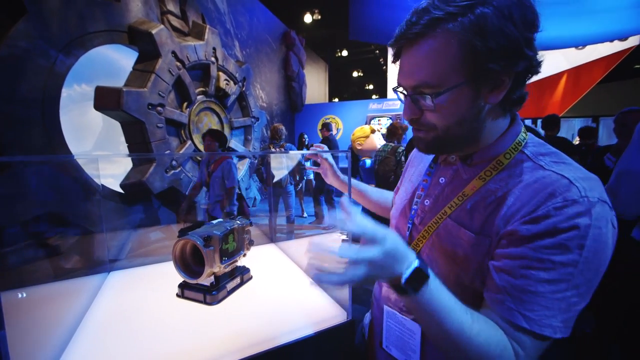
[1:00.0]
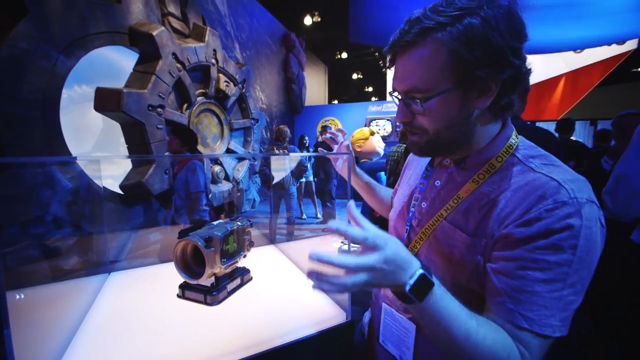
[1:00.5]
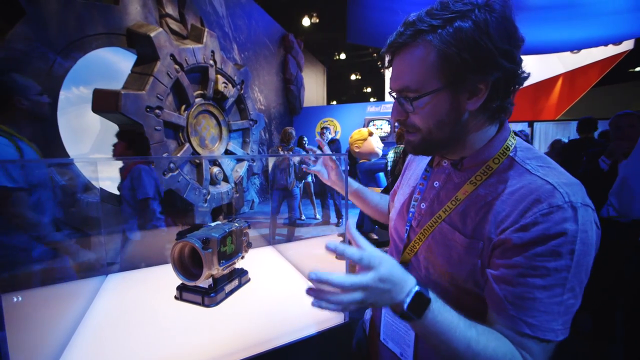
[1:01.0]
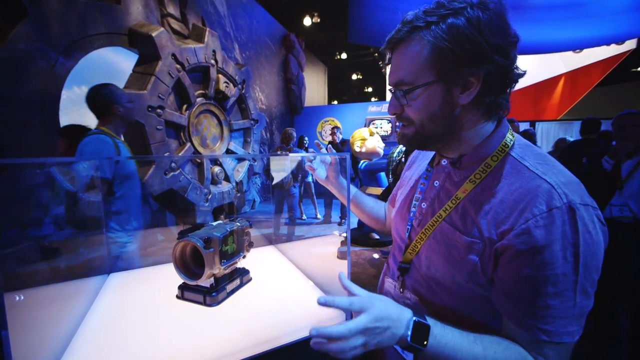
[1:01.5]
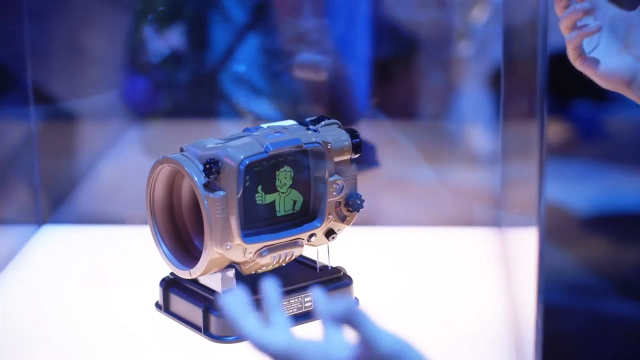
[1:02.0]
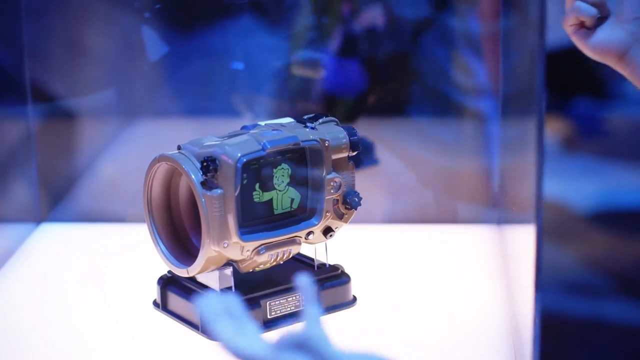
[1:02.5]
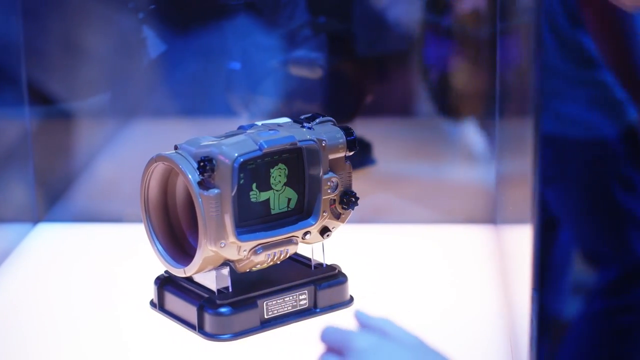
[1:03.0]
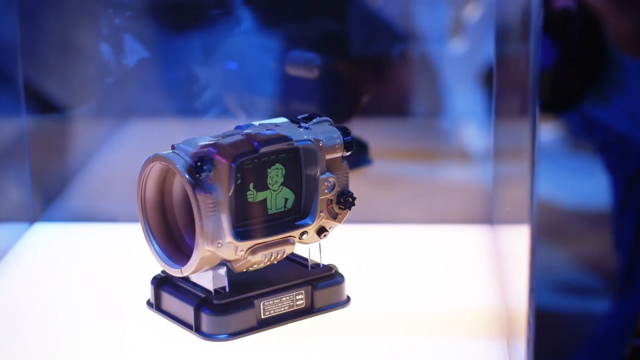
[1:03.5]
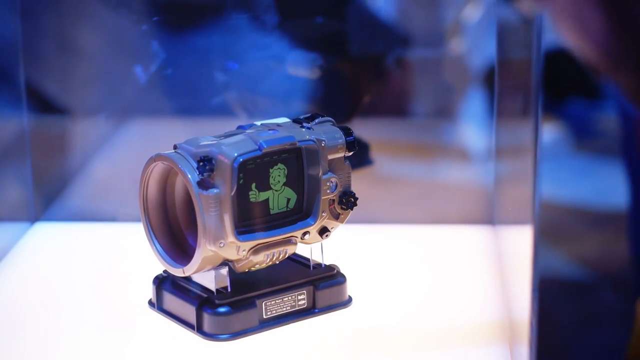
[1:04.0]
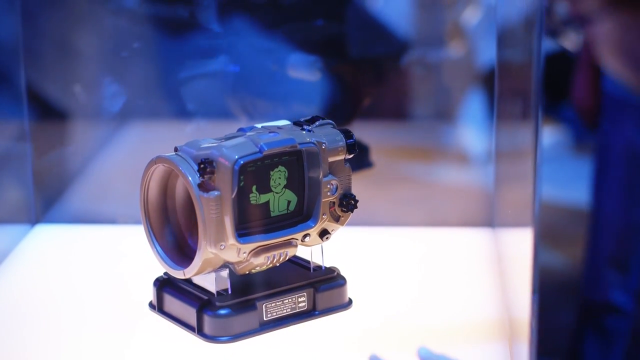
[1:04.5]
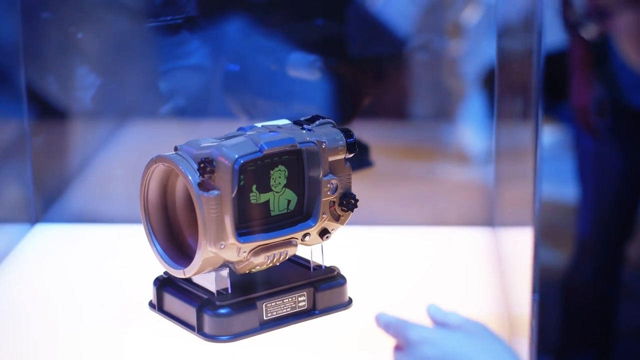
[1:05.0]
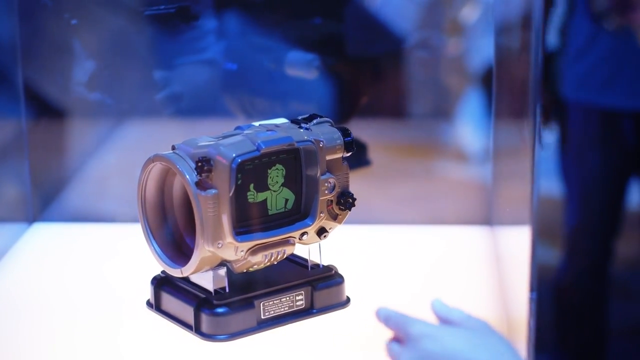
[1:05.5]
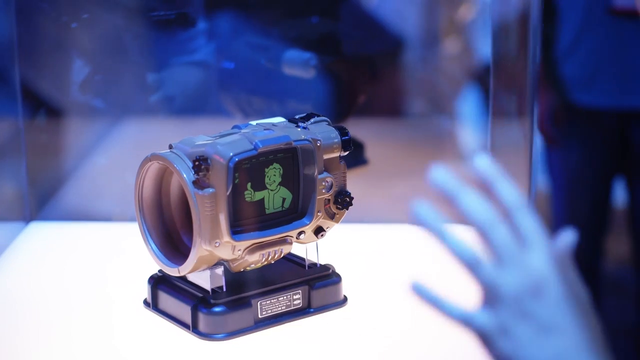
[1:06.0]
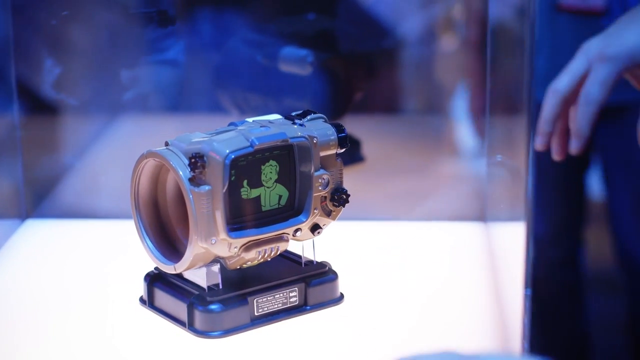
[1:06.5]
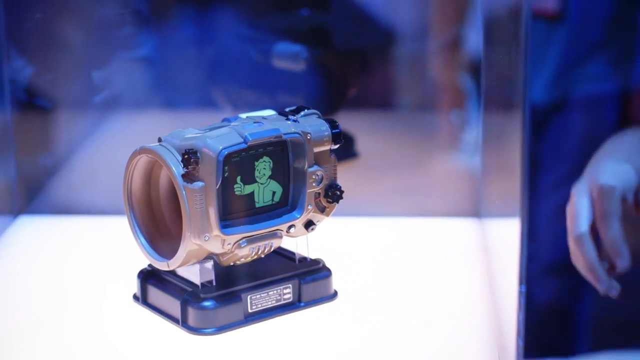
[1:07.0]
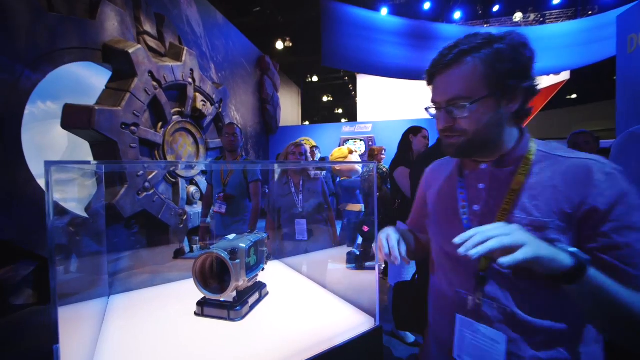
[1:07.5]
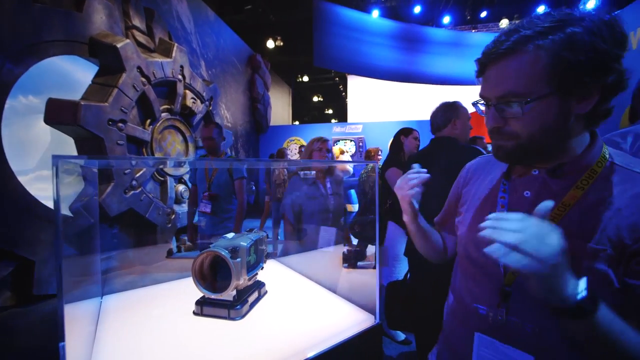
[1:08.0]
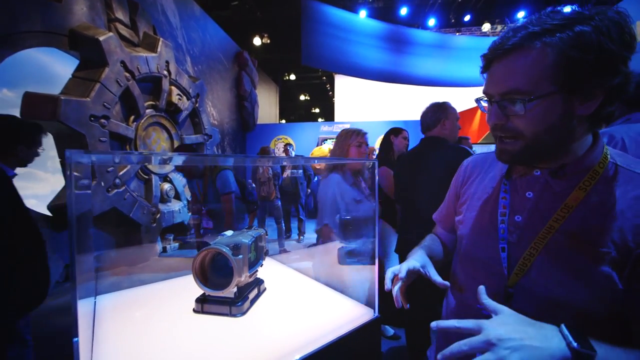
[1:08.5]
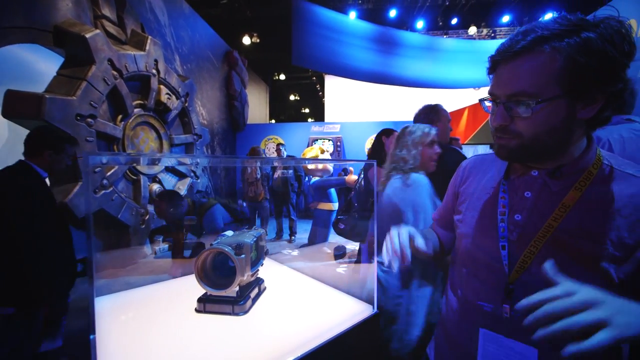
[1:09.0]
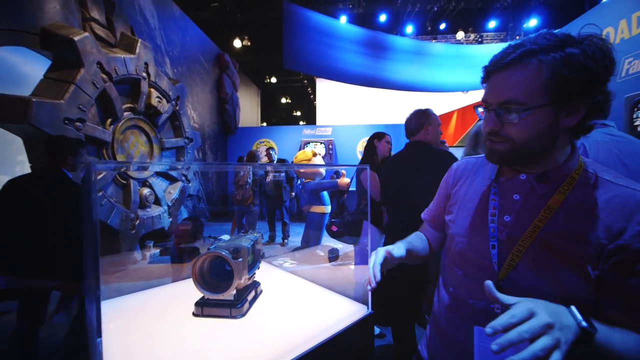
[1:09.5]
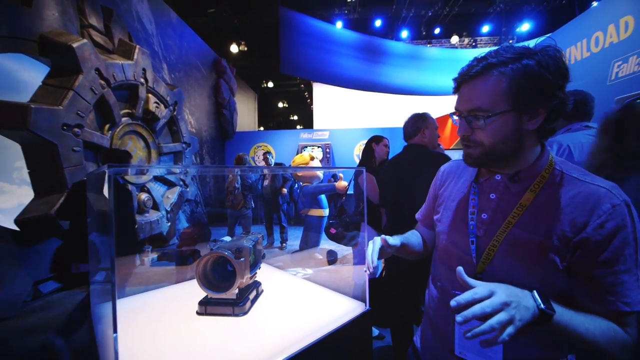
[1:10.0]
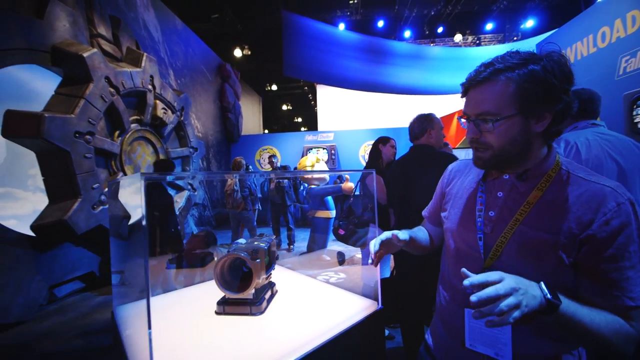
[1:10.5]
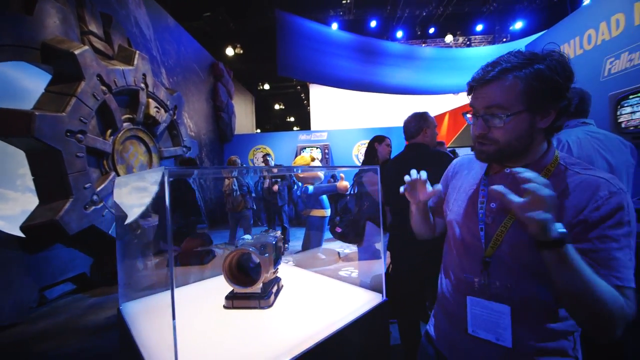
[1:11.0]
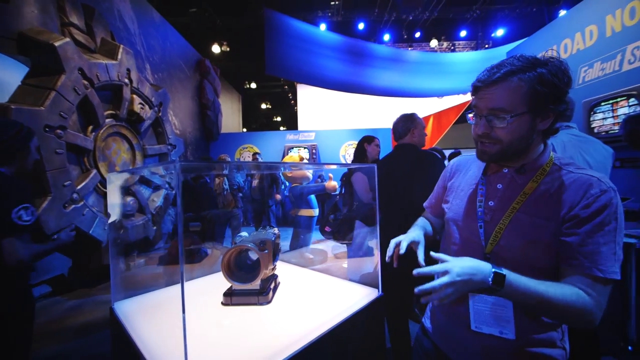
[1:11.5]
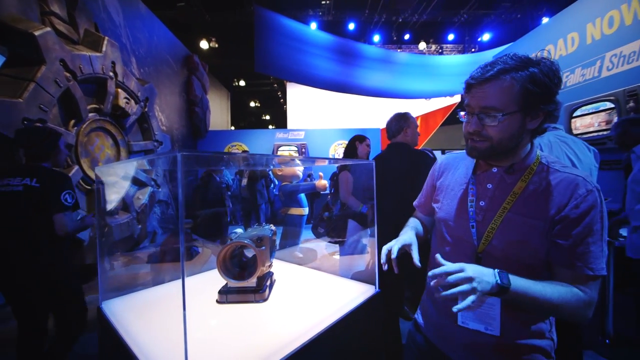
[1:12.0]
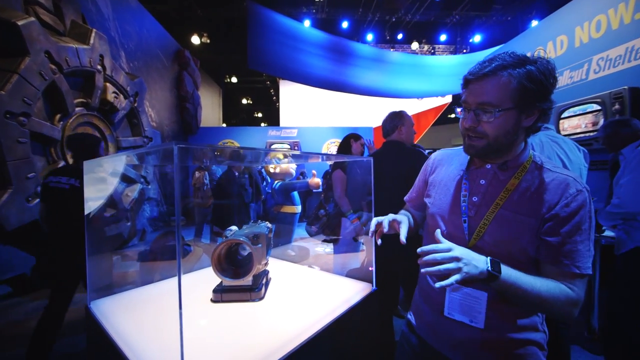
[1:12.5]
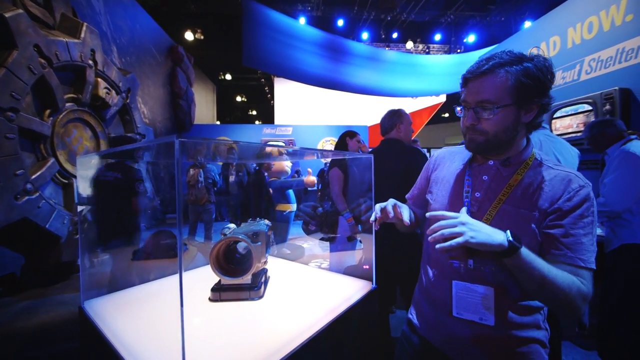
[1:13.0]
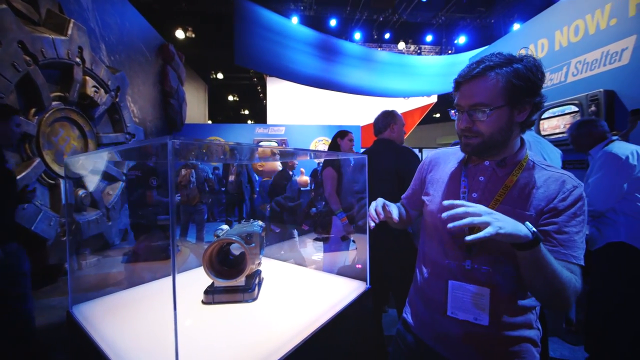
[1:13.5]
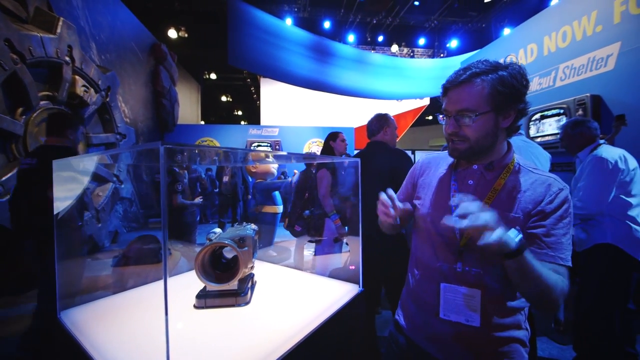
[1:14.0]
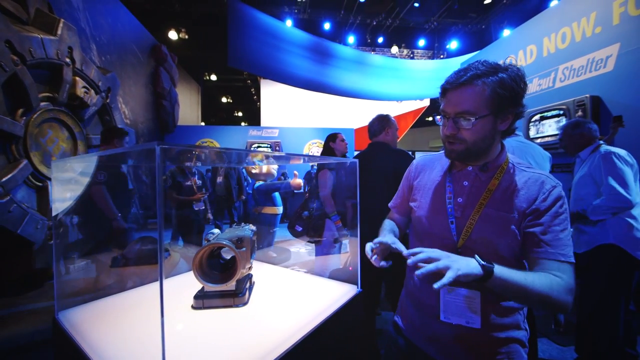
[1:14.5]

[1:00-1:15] A gold device with a screen sits on a black pedestal, with a character in the screen. A man in a pink shirt, a black watch, a lanyard and glasses motions at the device as he talks about it, then looks at his watch. A tight shot shows the device inside the clear case. People walk around, and a woman with long blonde hair walks toward the camera. A man looks at a screen. There is a blue wall, and a hand appears in the screen. A woman walks past, a man in a black jacket walks past, and a man in a t-shirt with a lanyard with white writing walks past. There is a picture of a device inside a case. The man with the lanyard and black watch motions. A woman in a short-sleeved shirt is in the background. A man walks past with a bag on his back, and a man bends over to scoot down. There is a big picture, a big window, and a big wall with a red, white and blue stripe. The device is in a clear case.